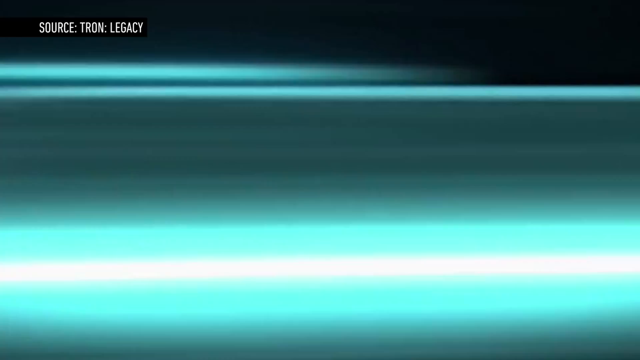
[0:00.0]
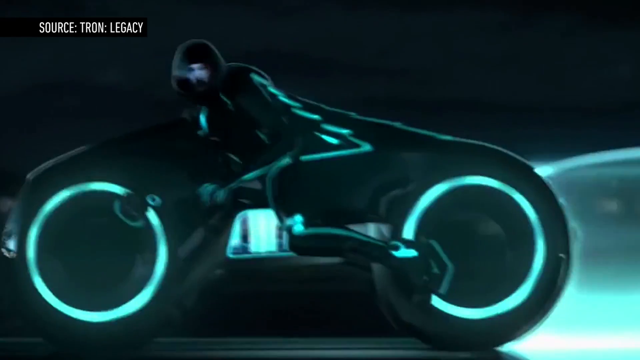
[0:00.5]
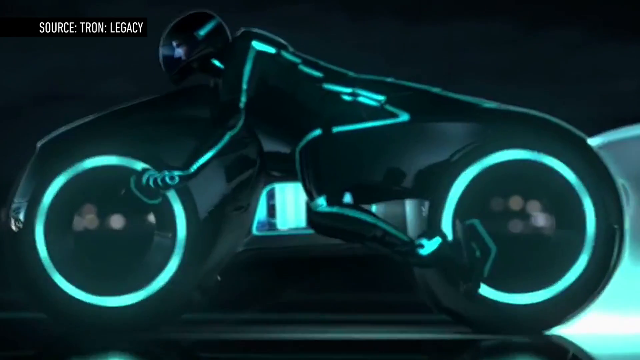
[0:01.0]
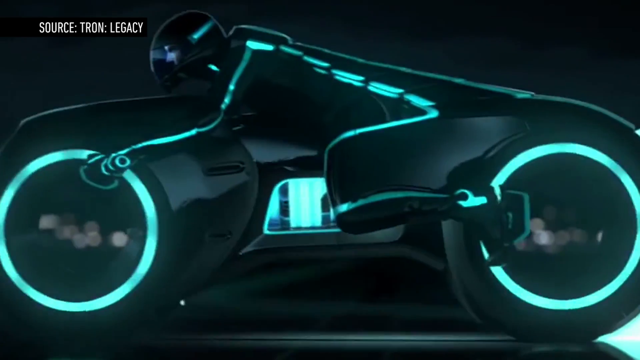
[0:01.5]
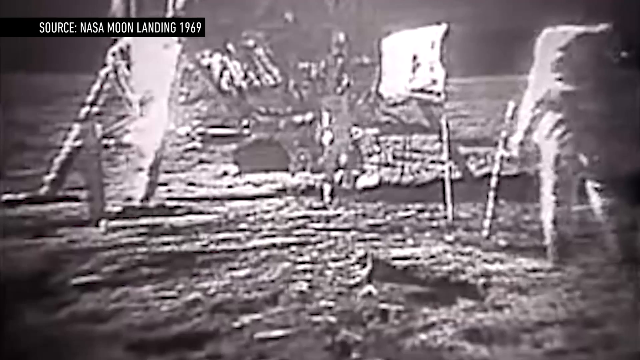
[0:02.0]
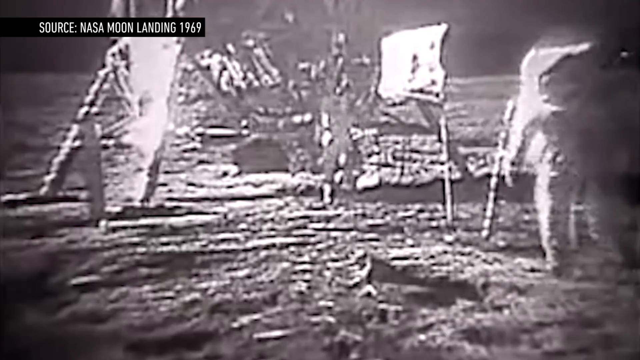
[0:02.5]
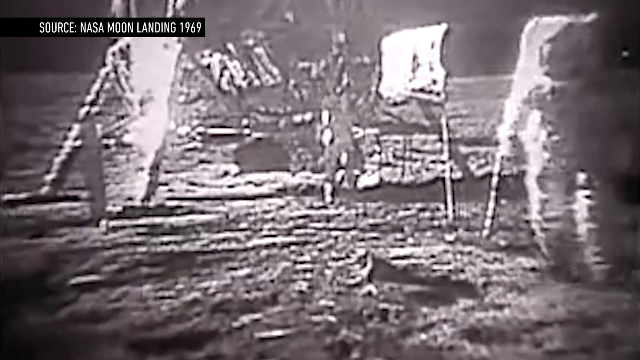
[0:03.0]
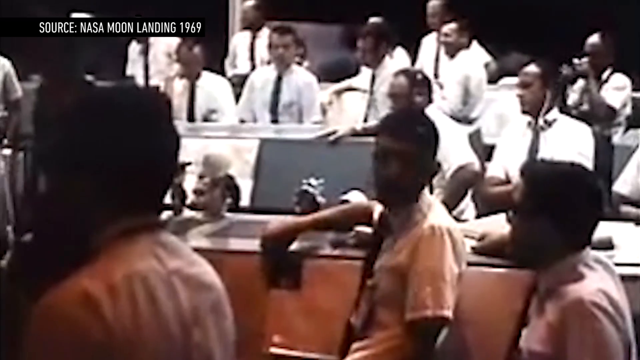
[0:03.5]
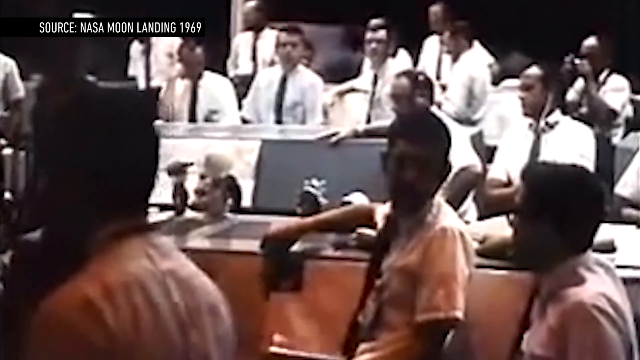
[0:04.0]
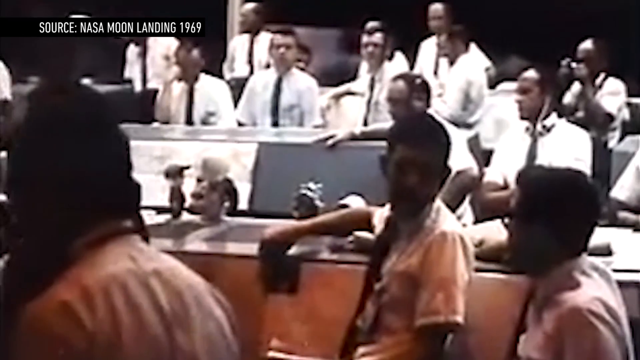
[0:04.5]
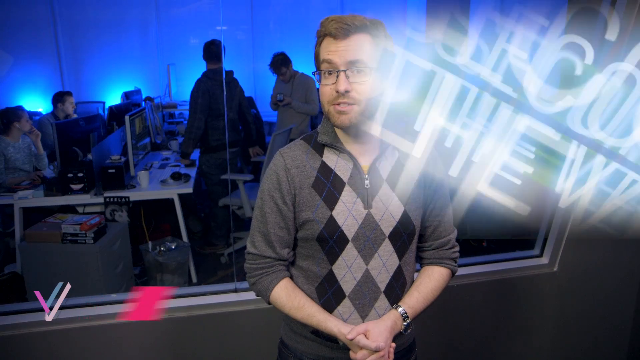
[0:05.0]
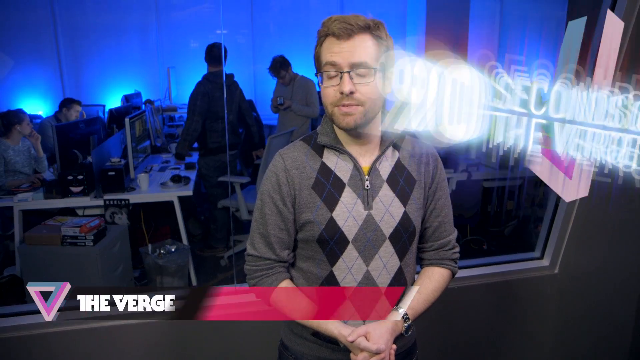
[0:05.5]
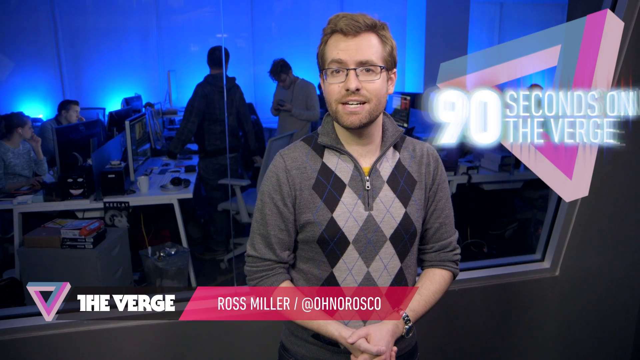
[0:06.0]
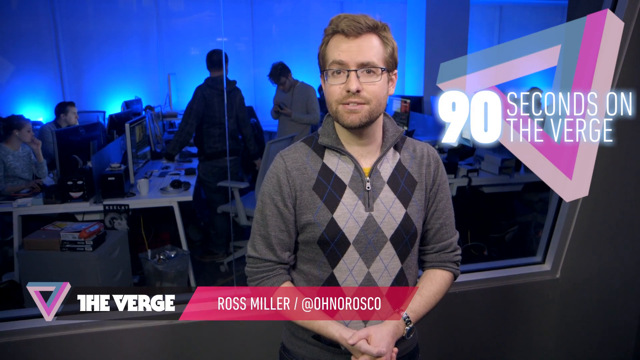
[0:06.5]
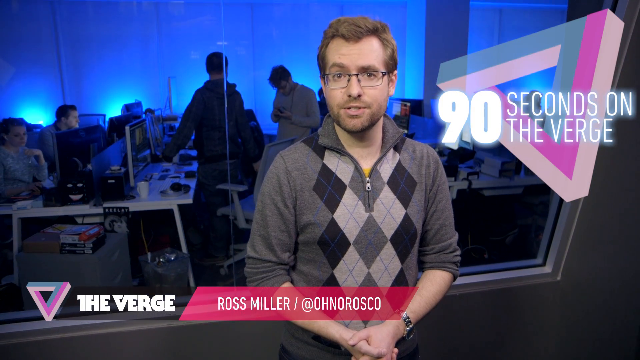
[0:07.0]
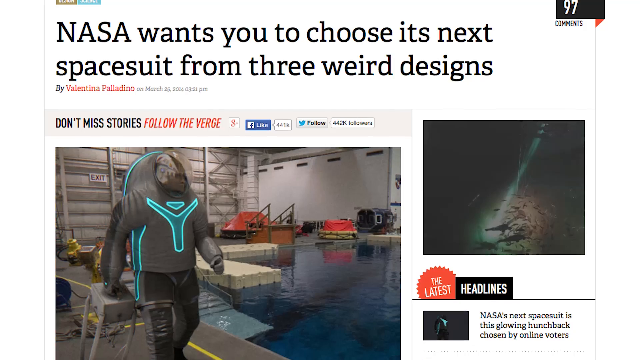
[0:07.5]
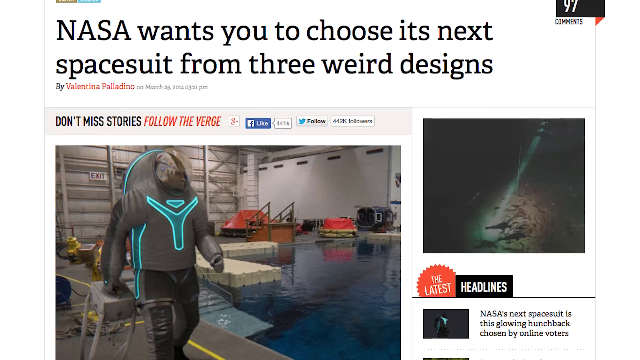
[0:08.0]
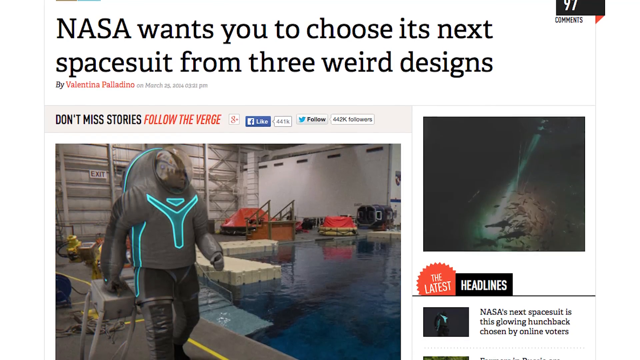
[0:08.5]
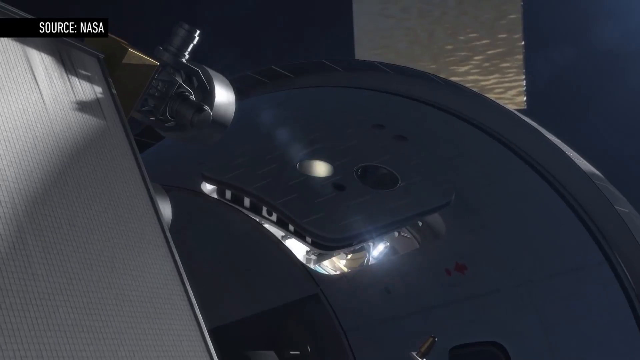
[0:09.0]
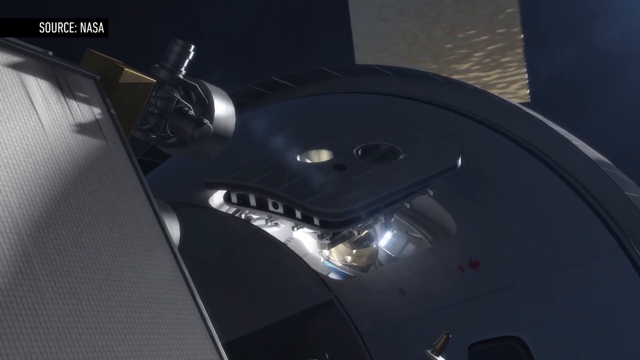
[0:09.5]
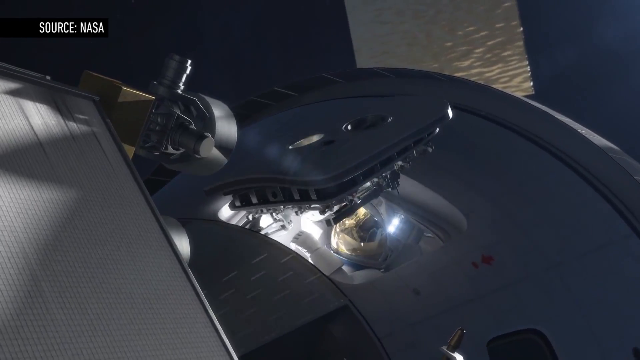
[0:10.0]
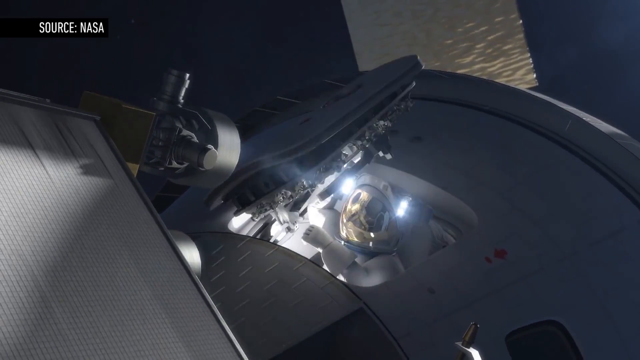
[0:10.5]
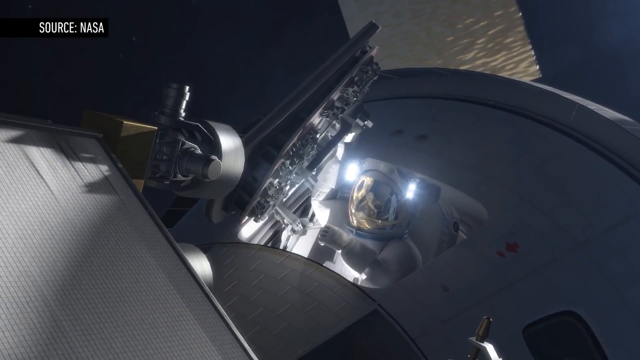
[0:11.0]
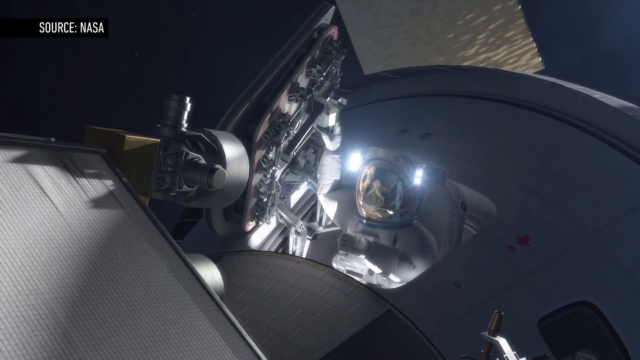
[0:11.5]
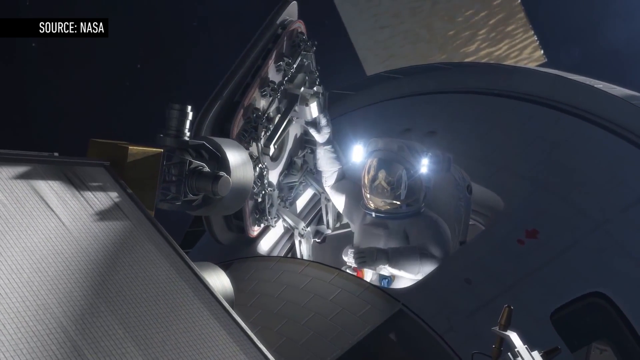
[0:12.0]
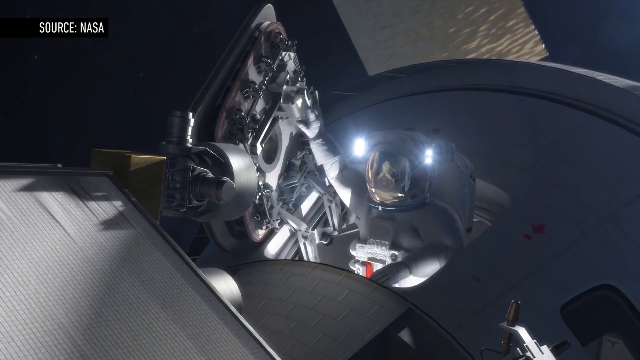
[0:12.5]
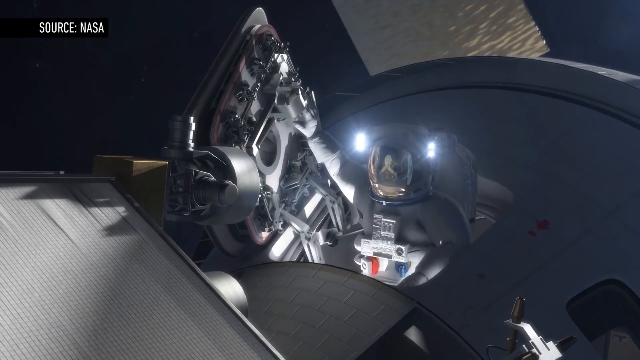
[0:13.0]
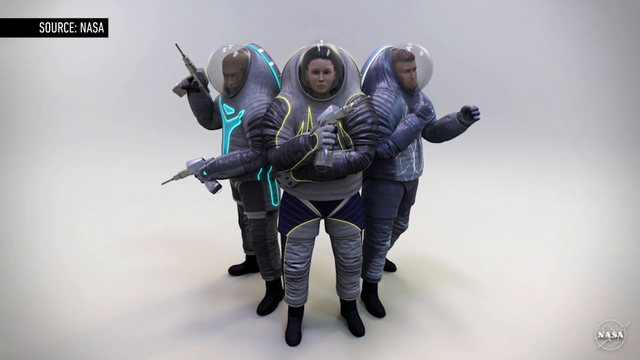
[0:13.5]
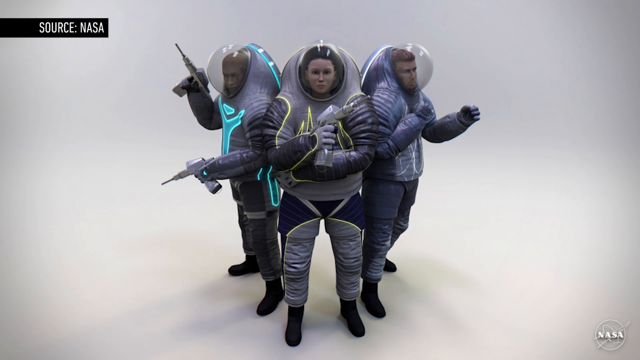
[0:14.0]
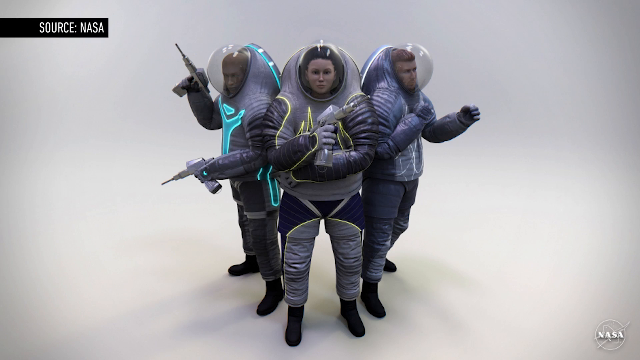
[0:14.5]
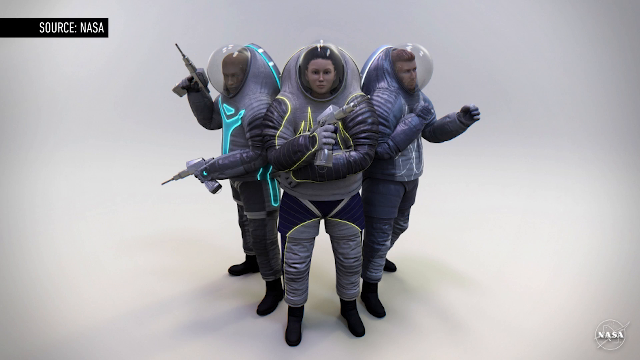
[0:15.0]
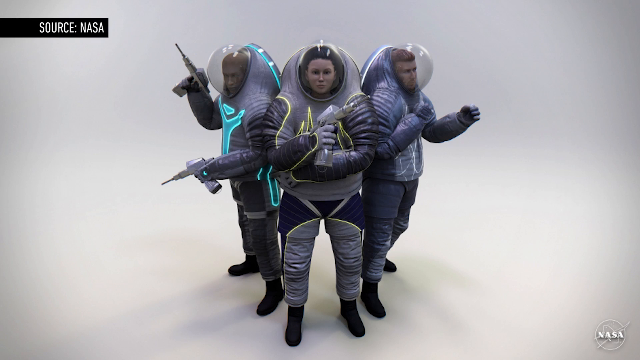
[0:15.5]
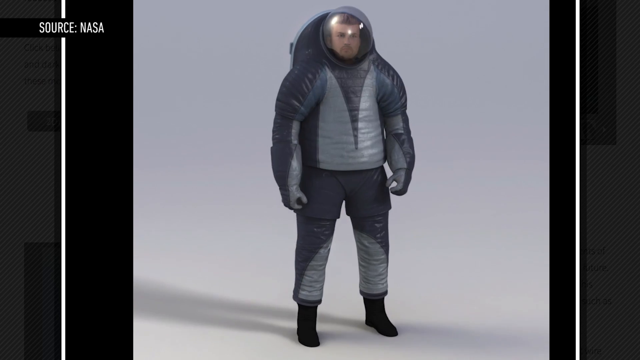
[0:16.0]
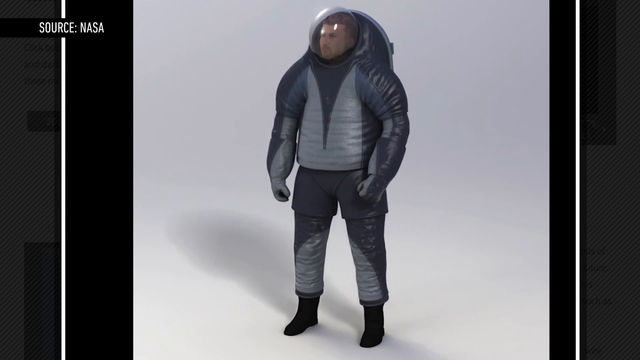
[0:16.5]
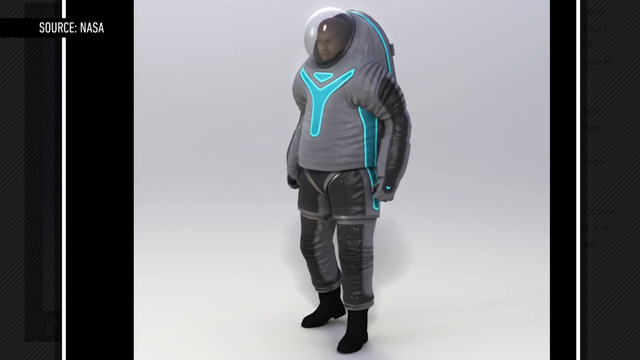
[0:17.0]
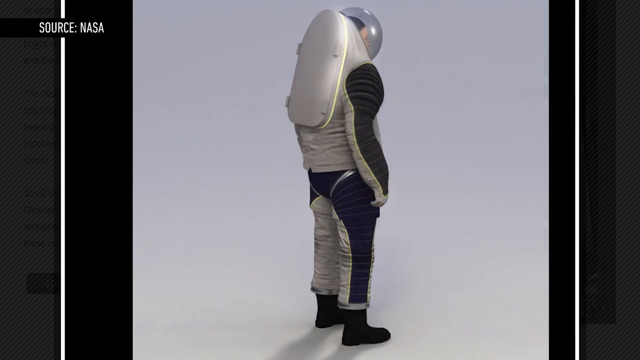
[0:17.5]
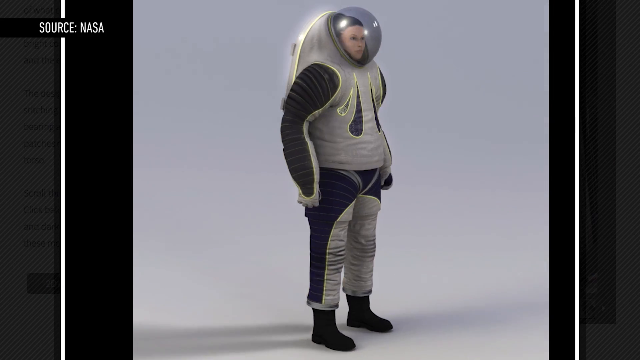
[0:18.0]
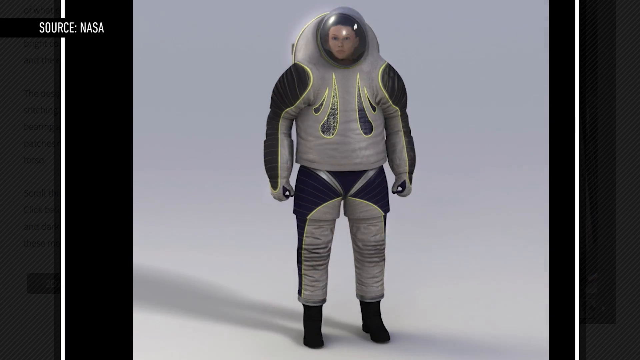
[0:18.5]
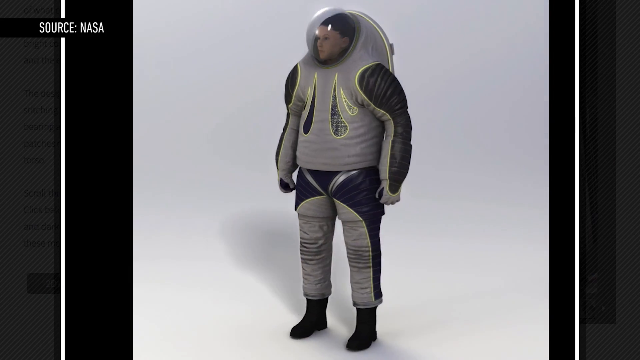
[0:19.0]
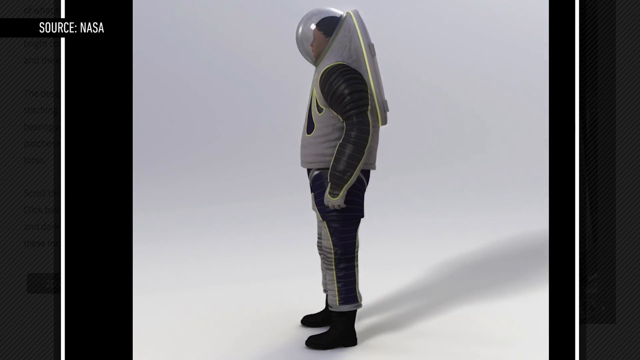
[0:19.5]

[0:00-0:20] The video opens with images from the movie Tron Legacy and of the arrival of man on the moon in 1969, provided by NASA. The presenter of the program, The Verge, then appears, with on-screen text reading "90 seconds on The Verge." His name is Ross Miller, and his Instagram handle, "@OHNOROSCO", is on the right. He seems to be explaining something. Different images follow, the first of a news item that says "NASA wants you to choose its next space suit from the three we have designed." Some shots of a ship appear, followed by the three spacesuits NASA designed for people to choose their favorite. They look somewhat curved and funny. The video then shows these designs one by one in more detail.